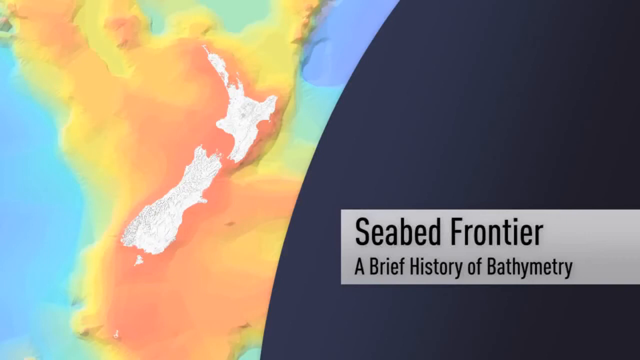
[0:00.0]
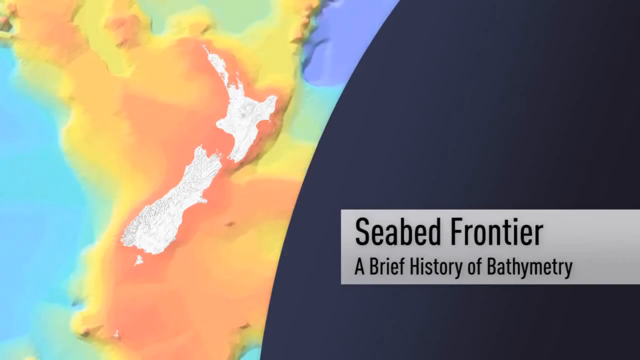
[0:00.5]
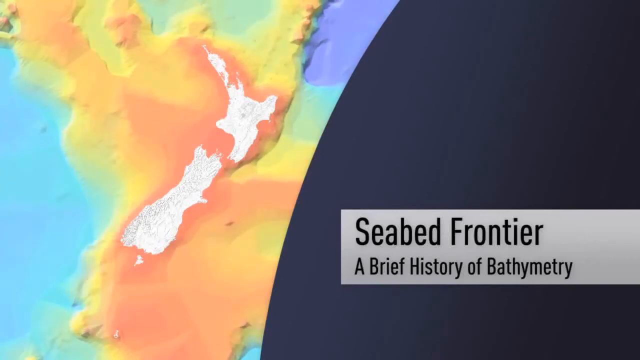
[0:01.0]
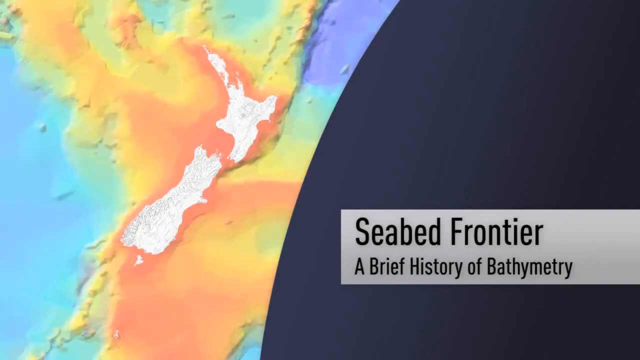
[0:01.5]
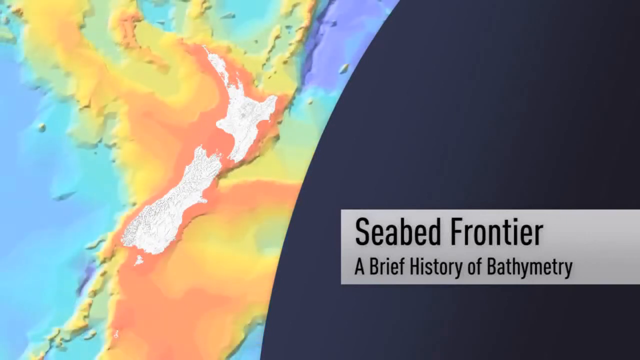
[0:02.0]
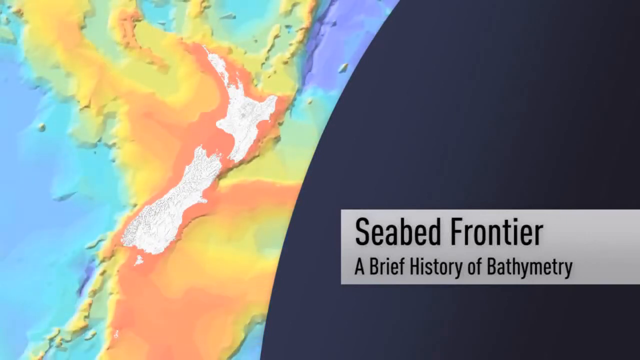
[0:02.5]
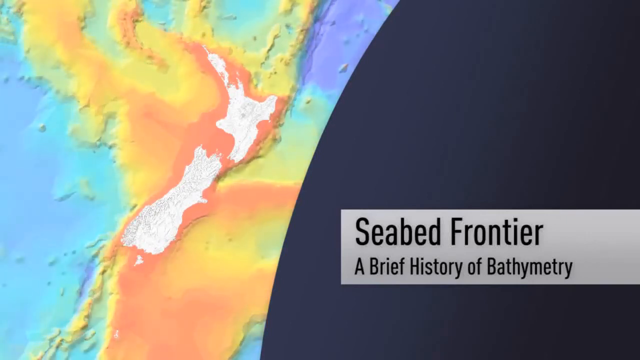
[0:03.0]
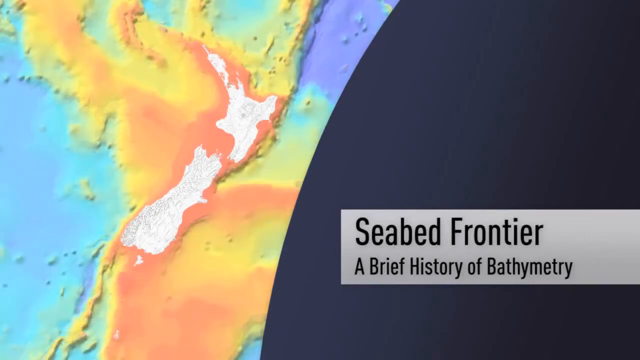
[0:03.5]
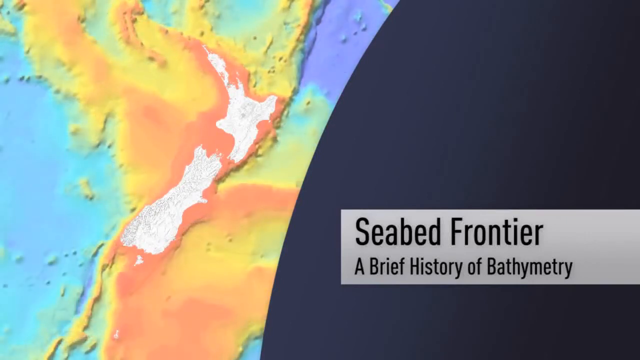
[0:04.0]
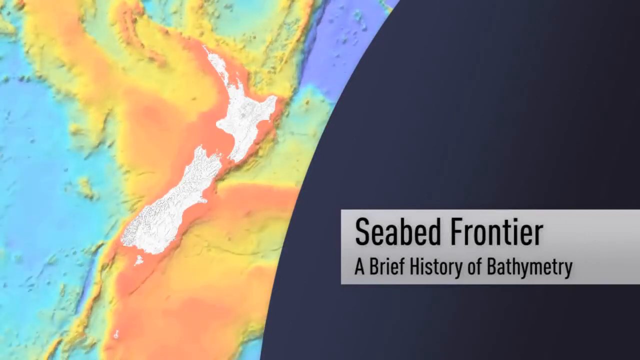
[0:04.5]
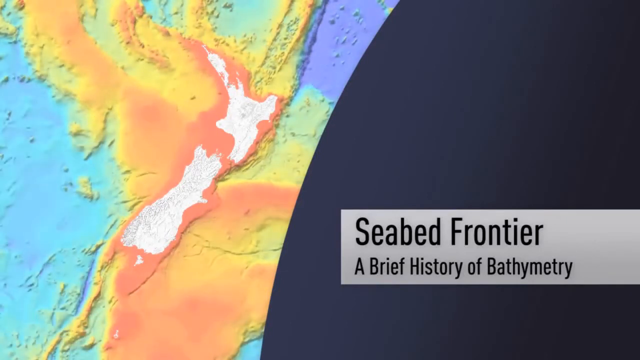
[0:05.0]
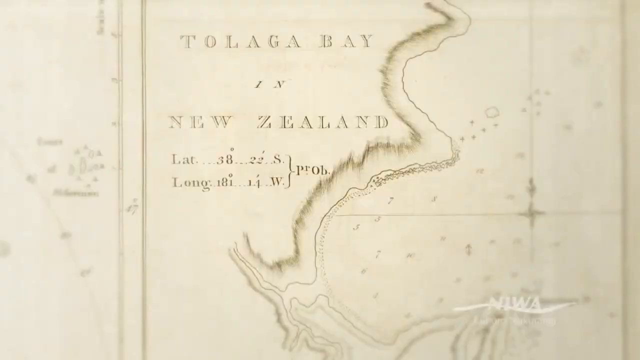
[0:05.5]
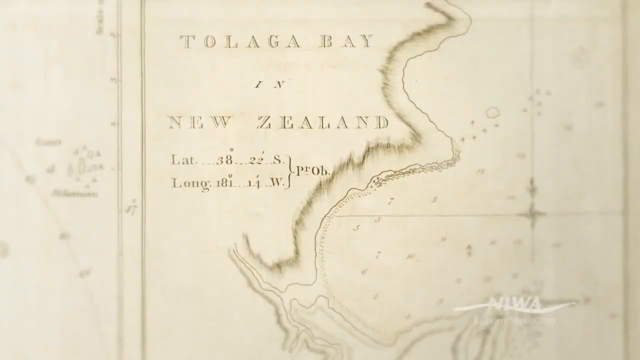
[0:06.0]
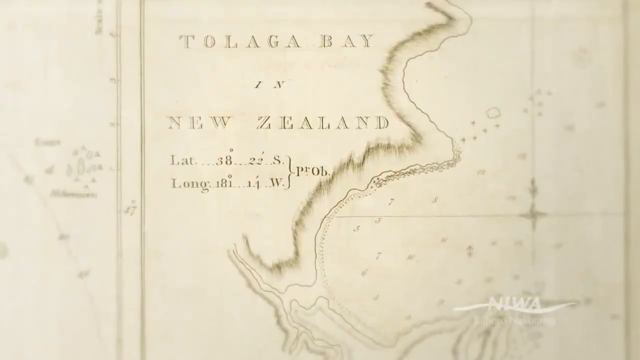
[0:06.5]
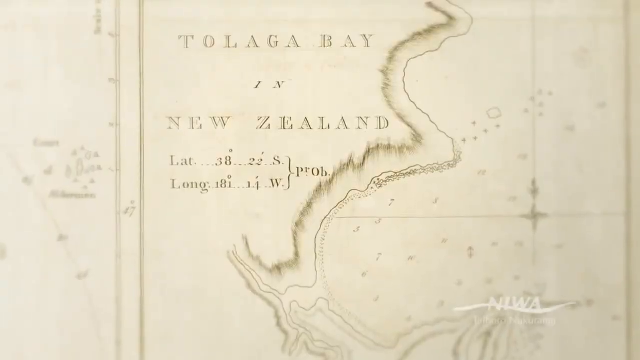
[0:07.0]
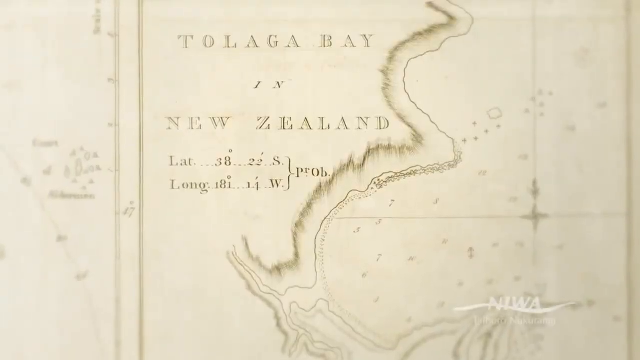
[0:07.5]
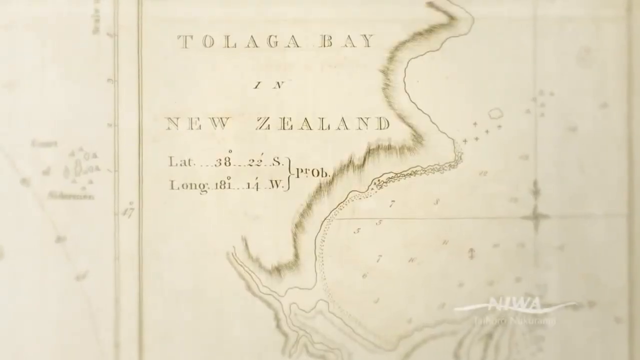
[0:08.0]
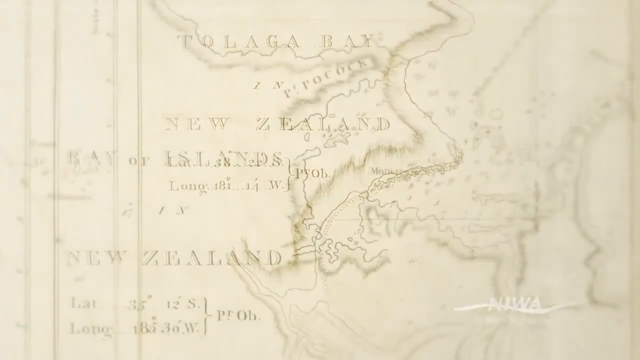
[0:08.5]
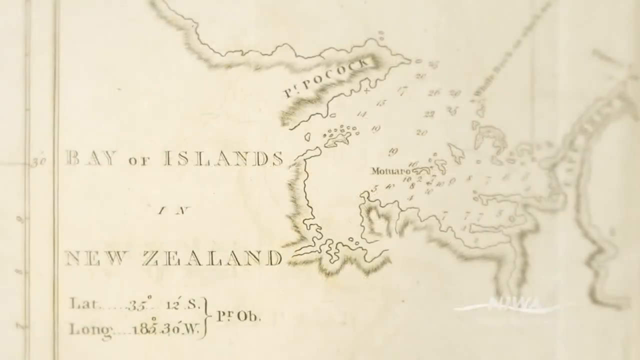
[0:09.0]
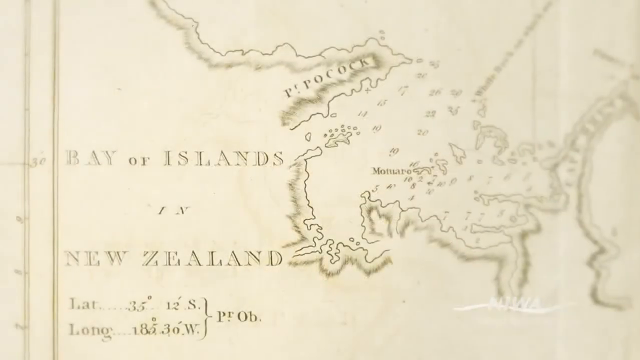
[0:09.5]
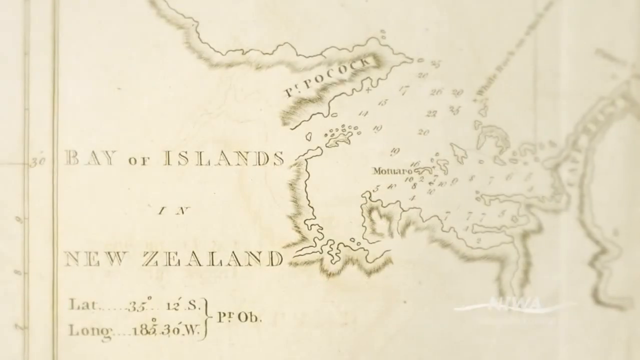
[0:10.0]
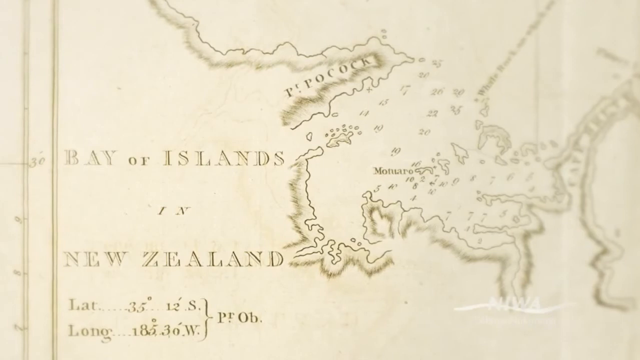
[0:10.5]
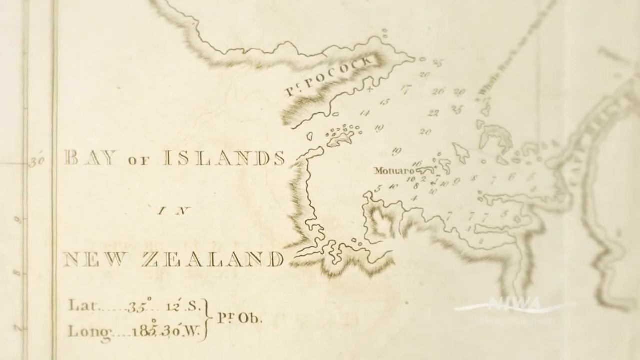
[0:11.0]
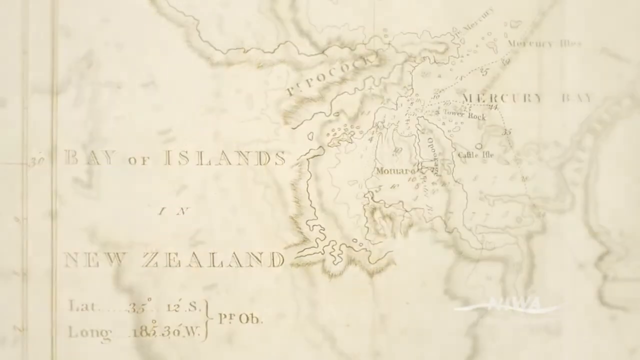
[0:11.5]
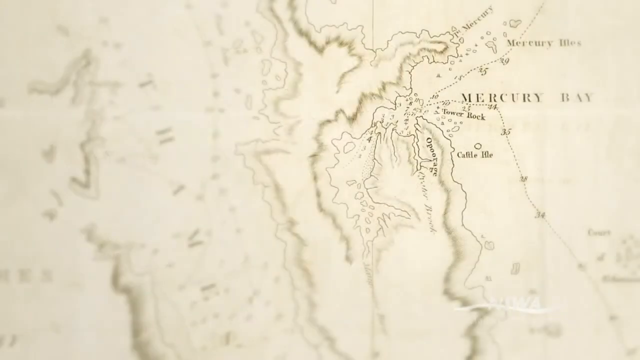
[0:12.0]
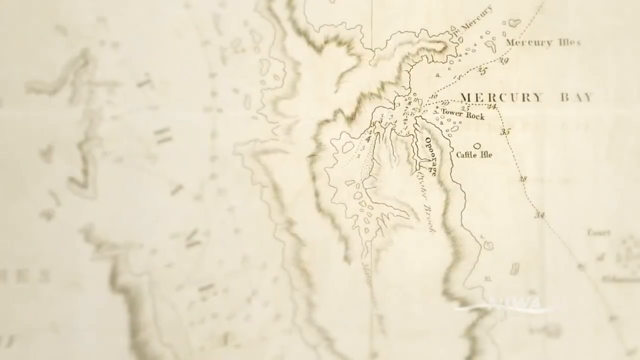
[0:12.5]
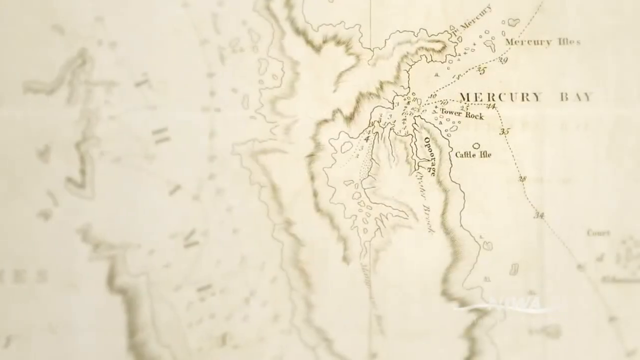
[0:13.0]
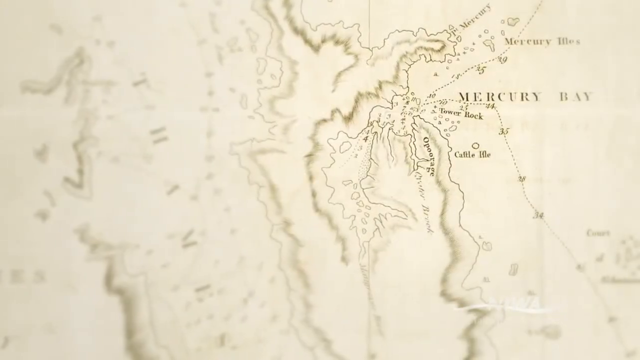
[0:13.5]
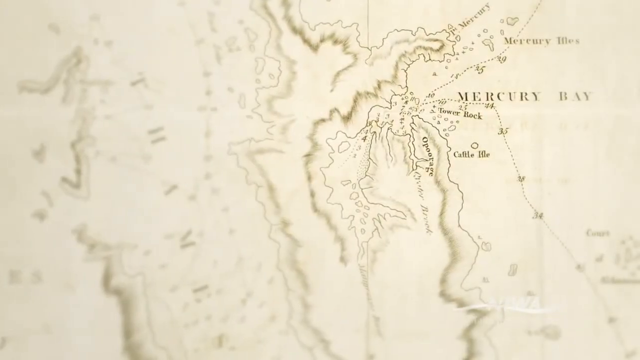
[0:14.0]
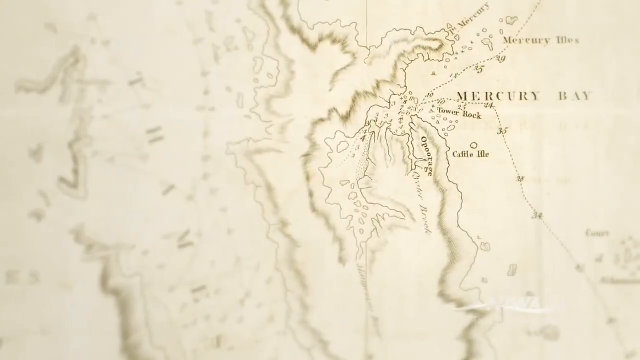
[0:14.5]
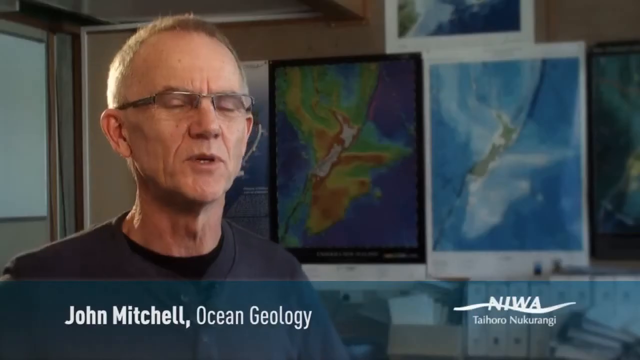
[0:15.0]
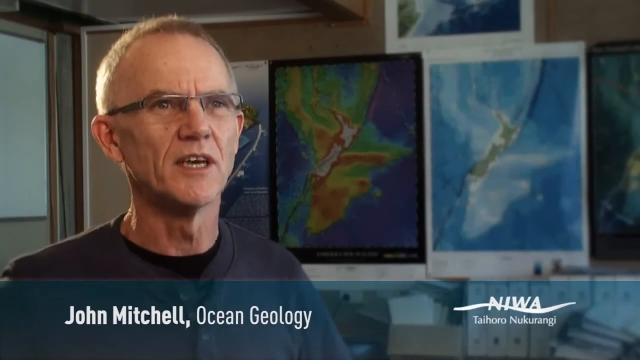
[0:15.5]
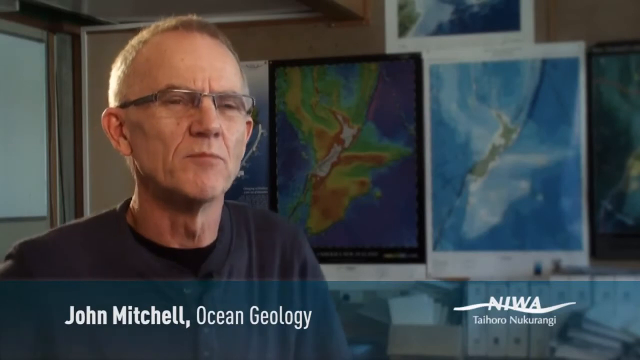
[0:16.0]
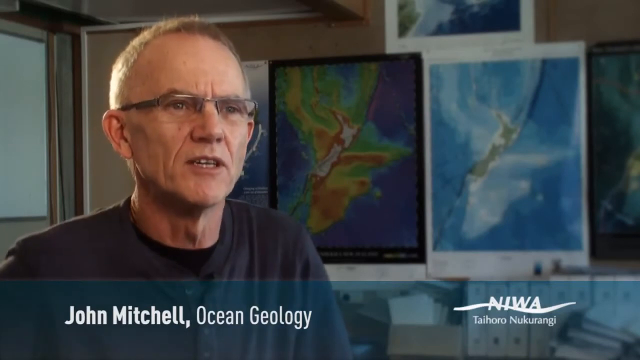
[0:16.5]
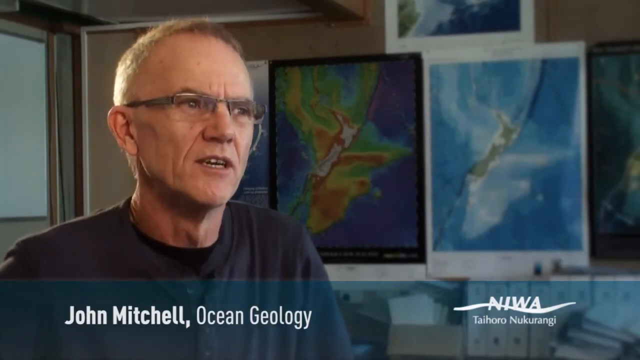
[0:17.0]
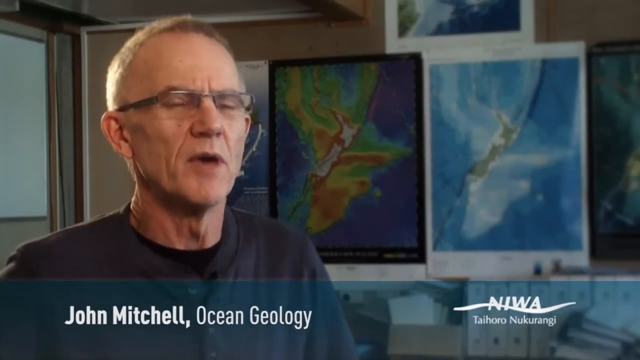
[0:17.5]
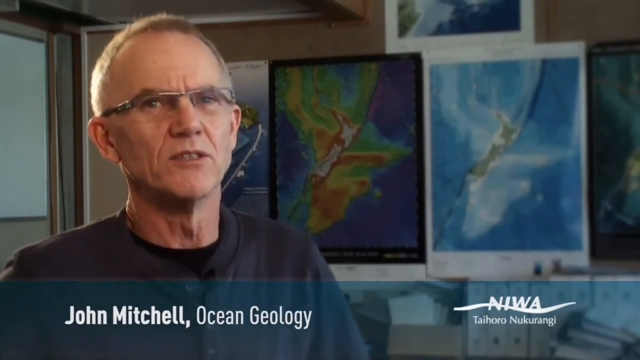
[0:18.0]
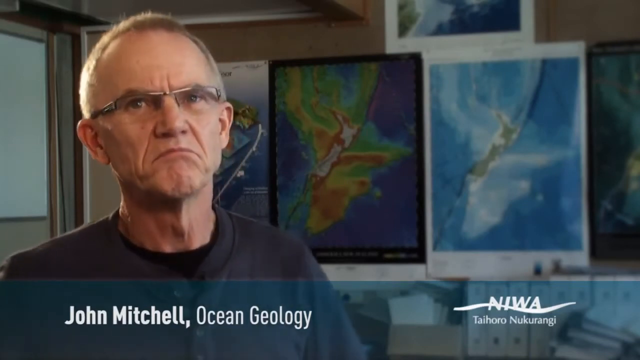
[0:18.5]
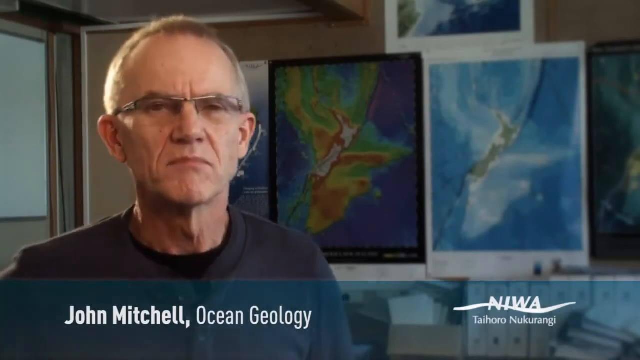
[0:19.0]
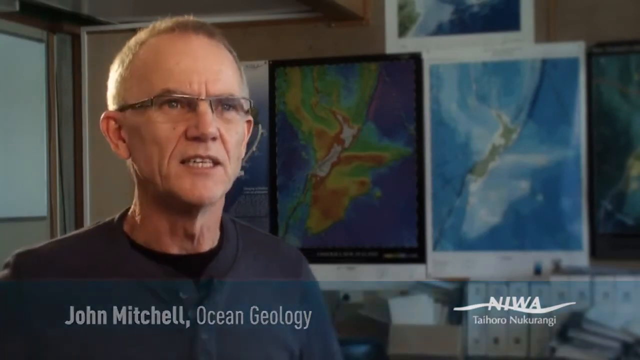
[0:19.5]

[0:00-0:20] The image opens split in two. On the right-hand side of the screen is a black background with a caption that reads "Seabed Frontier, a brief history of bathymetry". On the left is an outline of New Zealand, surrounded by a background of different colours ranging from light blue through greens, yellows and oranges to reds, presumably showing differences in sea temperature. The next shot shows an overview of an old map of Toluga Bay in New Zealand, followed by another map of the Bay Islands in New Zealand. A third map then shows Mercury Bay, presumably also in New Zealand. Next, a man speaks to the camera; he is John Mitchell of Ocean Geology. He is Caucasian, probably in his mid to late fifties, with short hair and glasses, and wears a dark blue or black t-shirt. Behind him on the wall are various pictures of New Zealand from above.